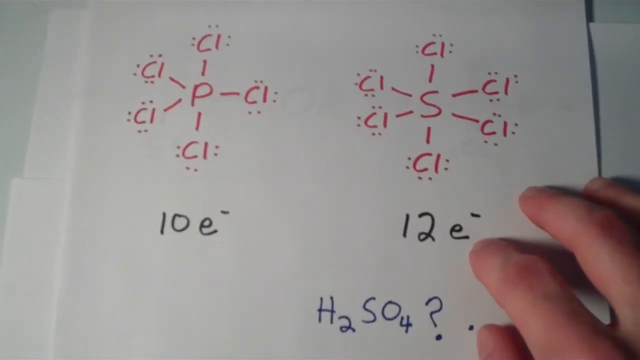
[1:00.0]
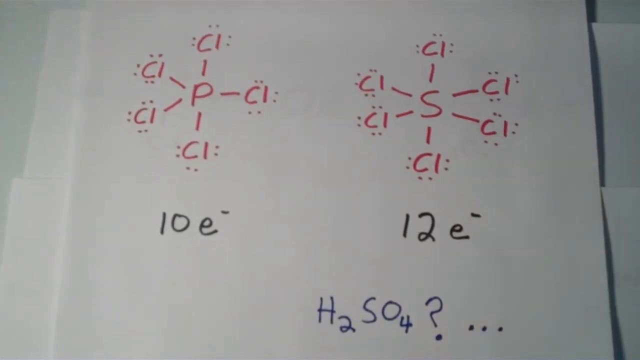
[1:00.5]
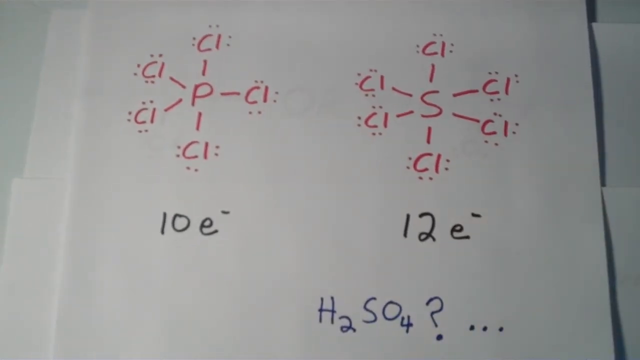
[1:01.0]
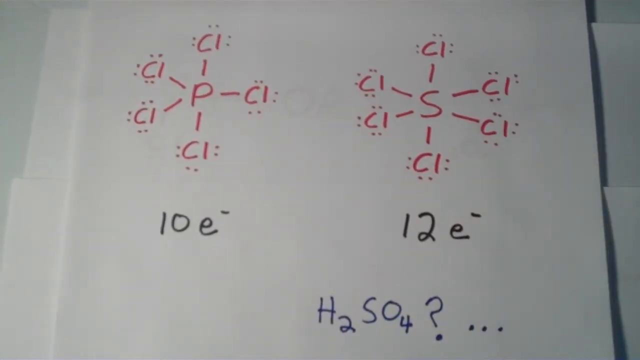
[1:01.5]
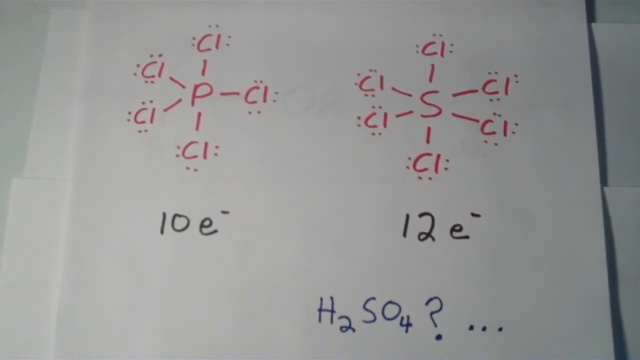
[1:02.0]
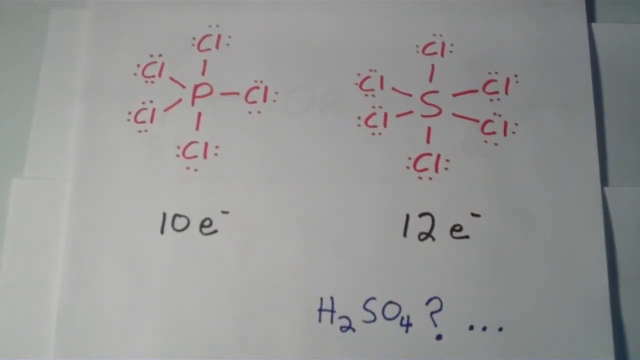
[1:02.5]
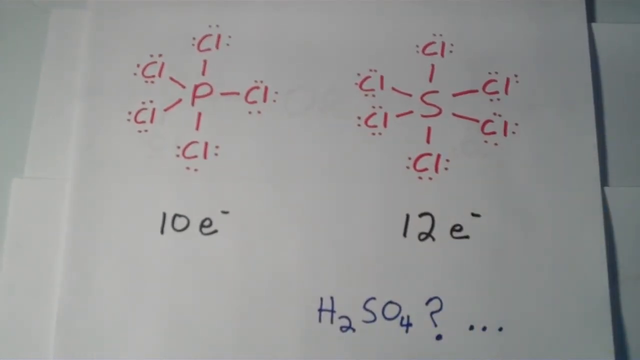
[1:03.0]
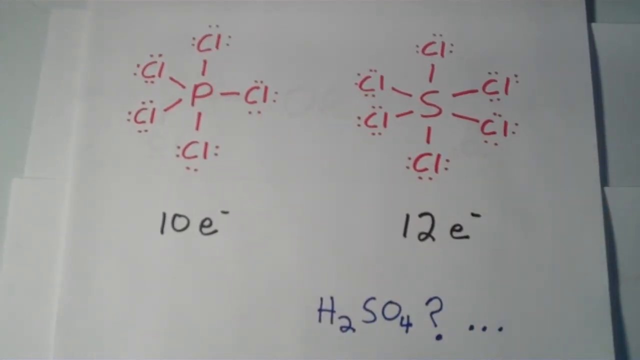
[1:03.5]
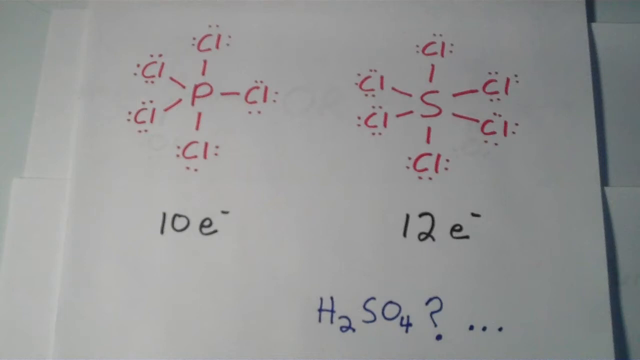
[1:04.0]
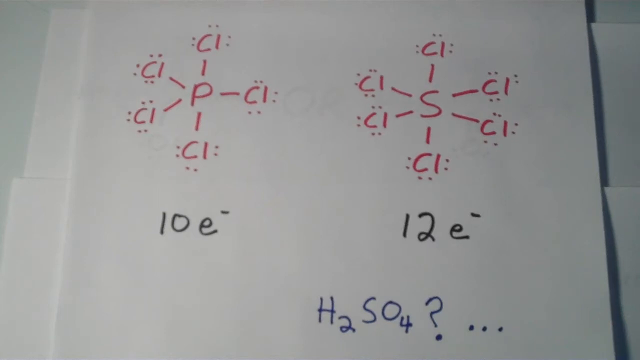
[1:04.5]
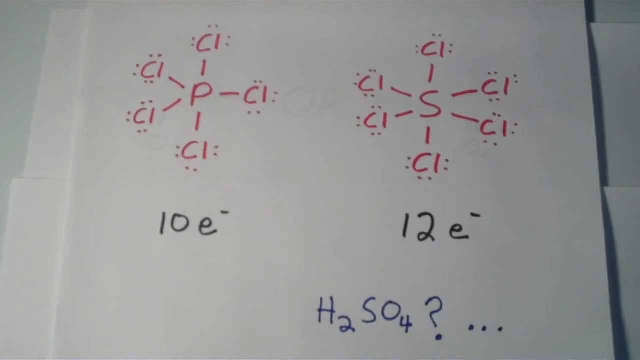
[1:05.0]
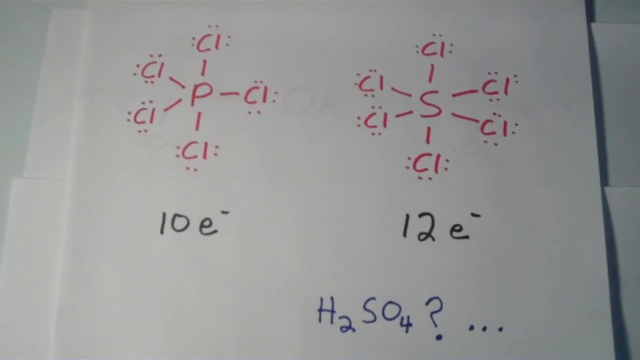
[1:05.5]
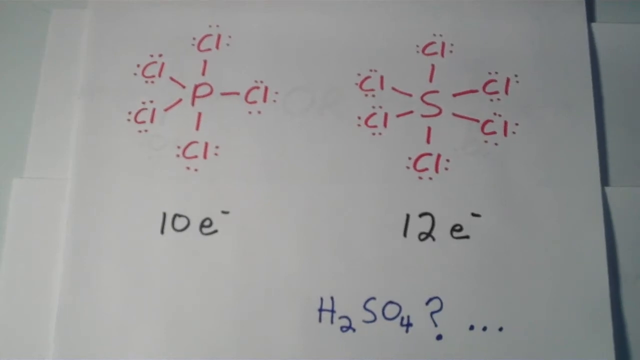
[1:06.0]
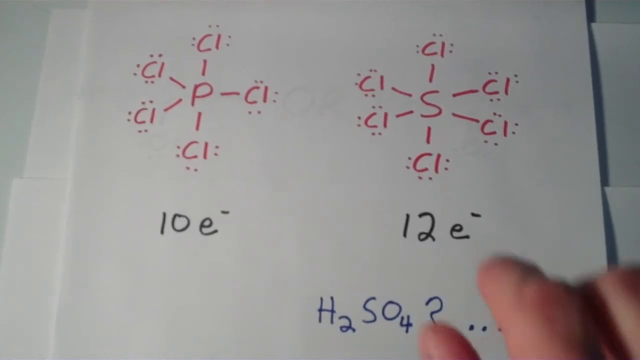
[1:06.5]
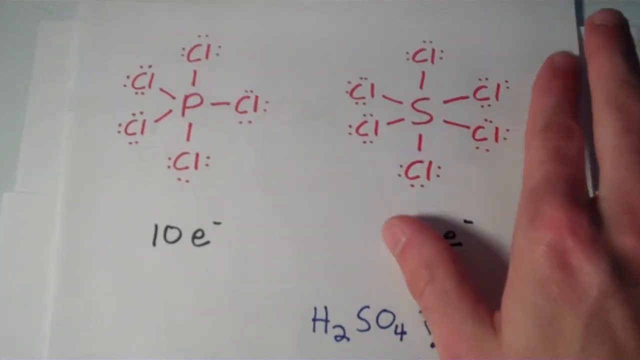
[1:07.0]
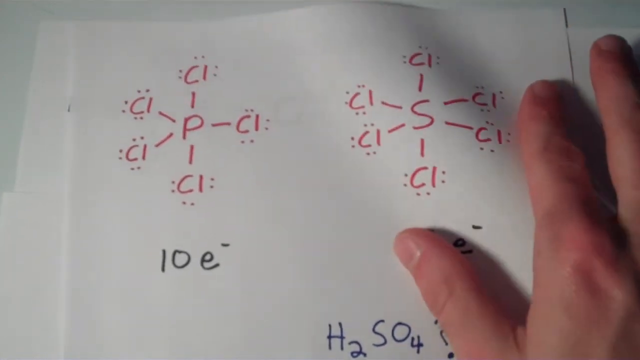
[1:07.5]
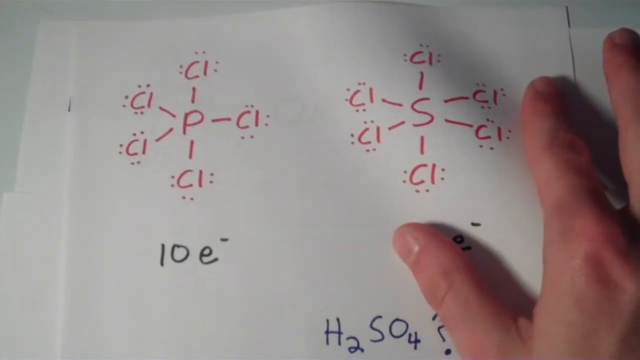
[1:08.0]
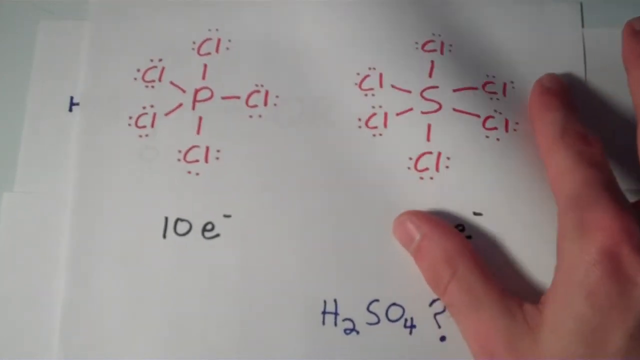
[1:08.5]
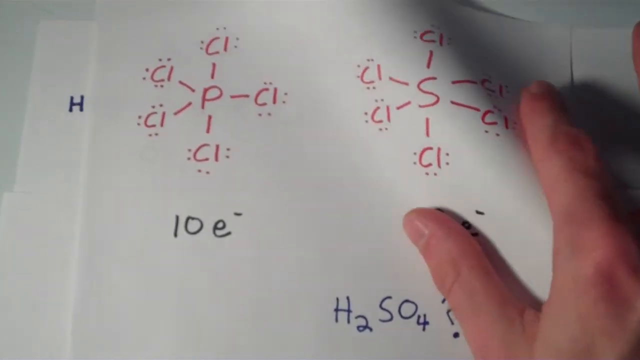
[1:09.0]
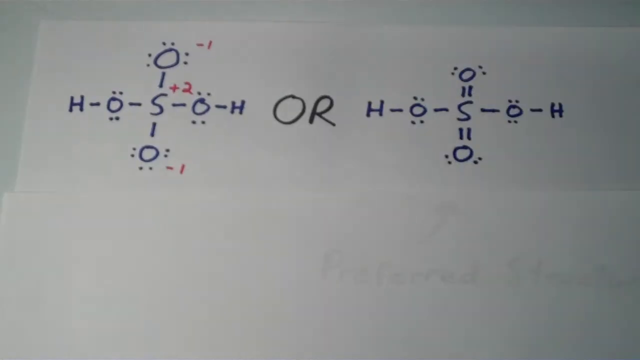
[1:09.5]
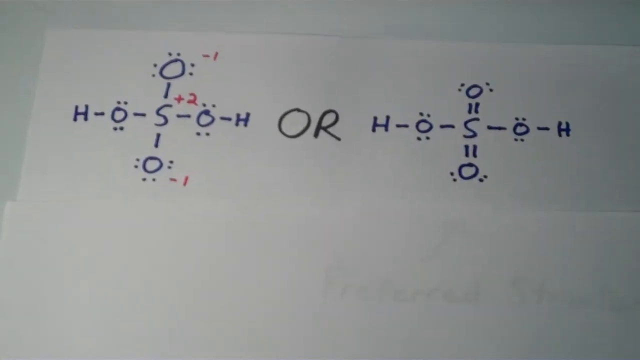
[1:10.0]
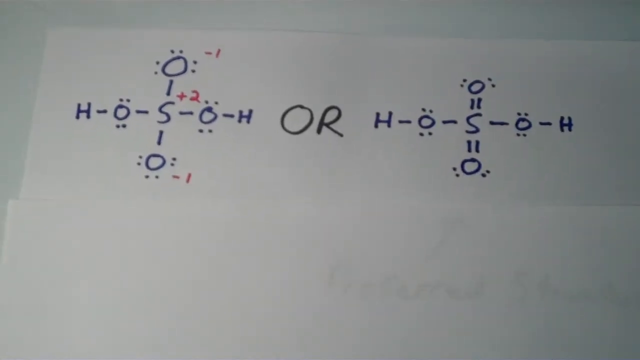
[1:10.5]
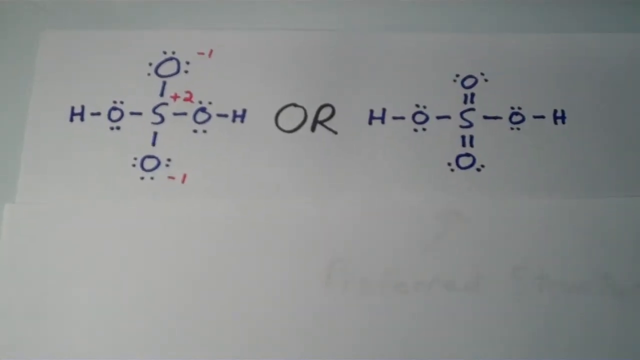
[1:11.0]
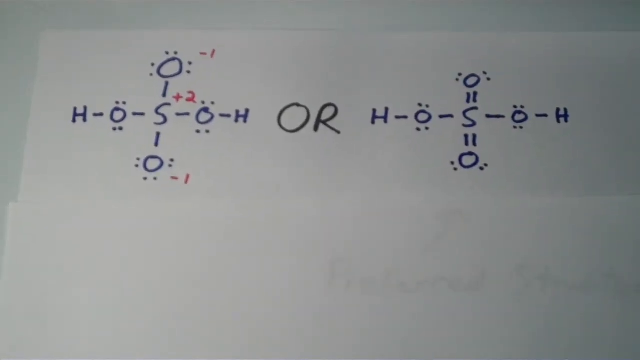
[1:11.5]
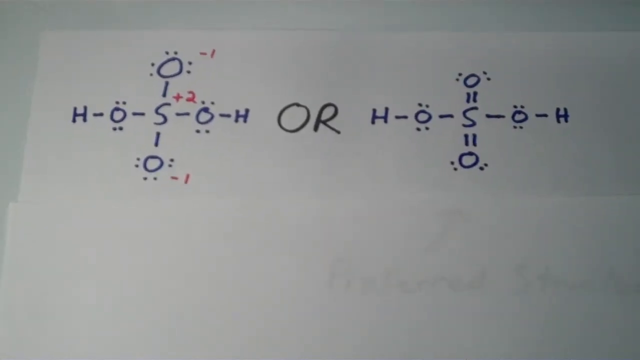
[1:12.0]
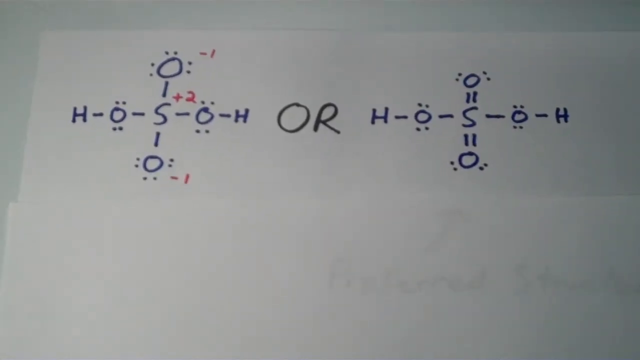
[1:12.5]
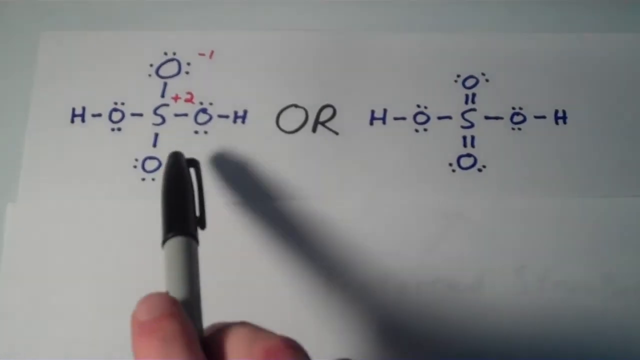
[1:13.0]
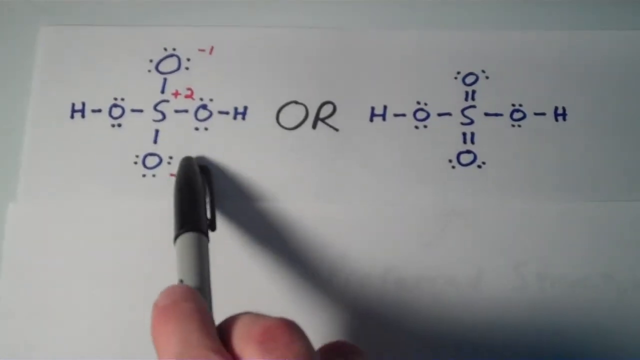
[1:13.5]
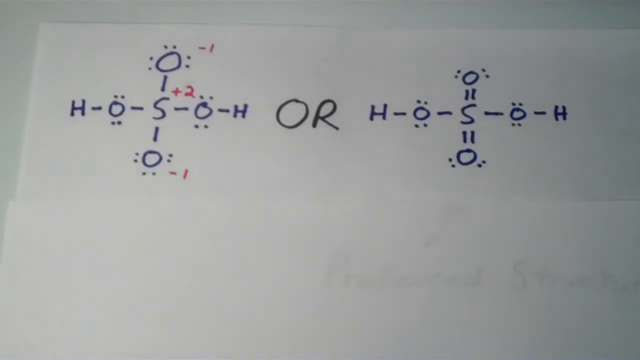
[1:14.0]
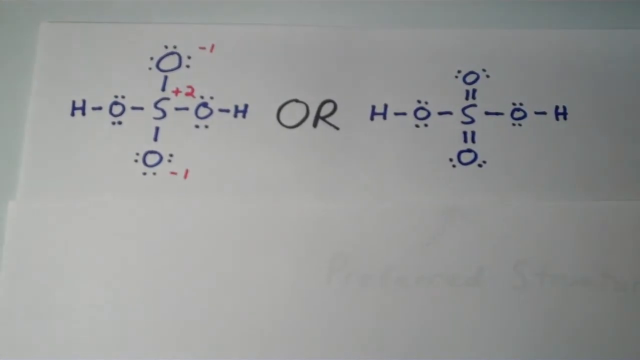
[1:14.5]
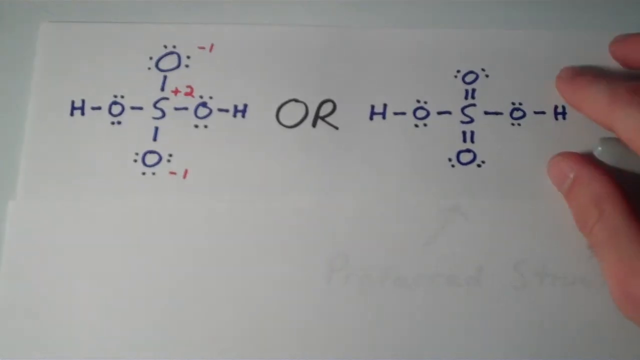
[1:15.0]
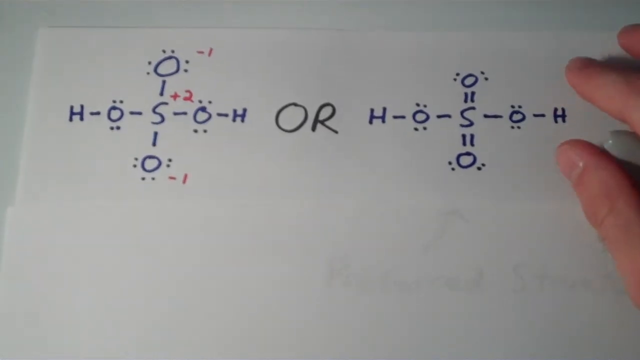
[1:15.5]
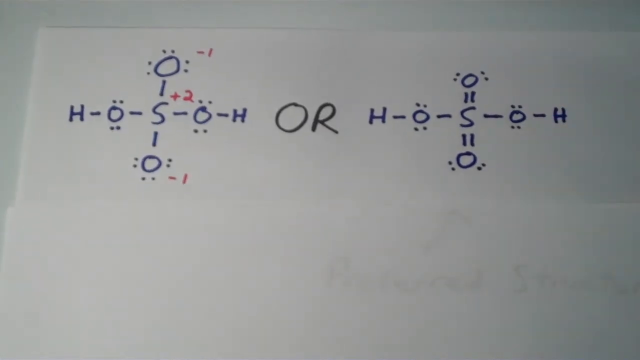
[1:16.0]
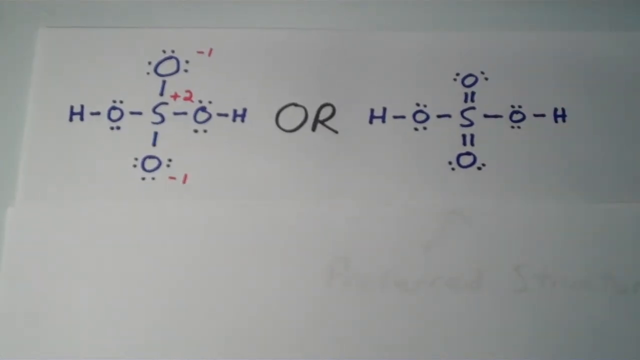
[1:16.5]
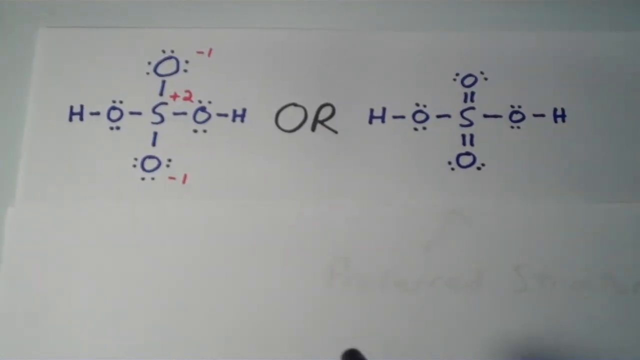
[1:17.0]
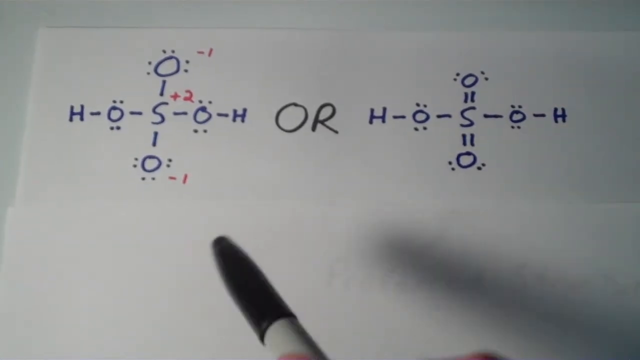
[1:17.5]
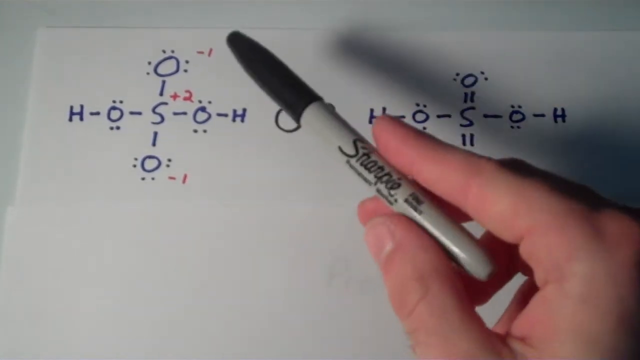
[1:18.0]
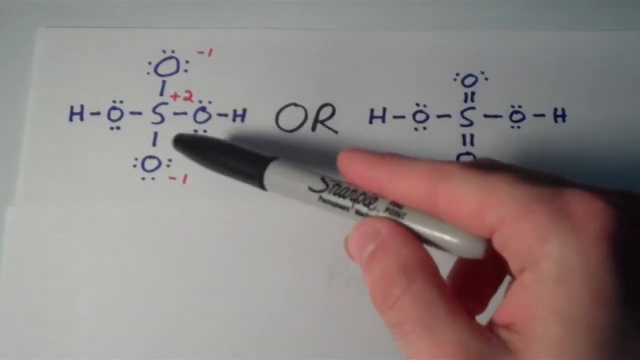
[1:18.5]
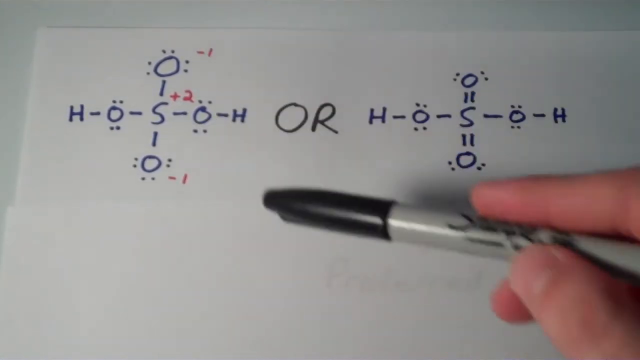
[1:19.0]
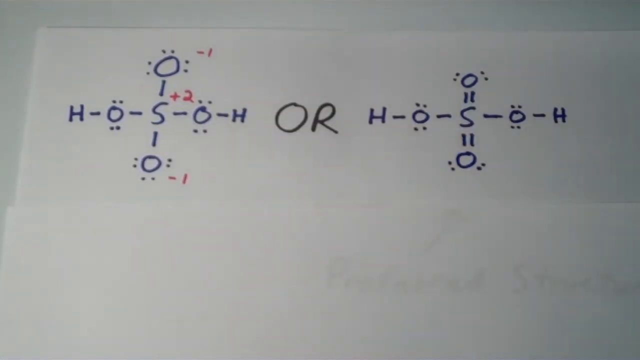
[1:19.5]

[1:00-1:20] The instructor moves the page out, revealing a new white page with a Lewis structure for sulfuric acid drawn in two versions, with an "or" written between them. The left structure has red marks on it: negative one, plus two, and negative one. The instructor points at the left Lewis structure with a sharpie pen or marker. In the right structure, the bonds from S to the oxygen atoms are double bonds, whereas in the left structure they are single bonds, which appears to be the difference between the two.